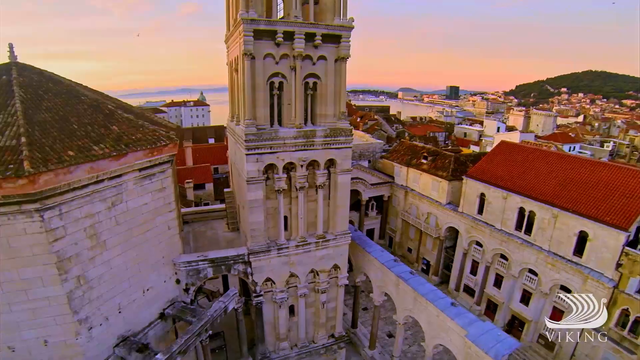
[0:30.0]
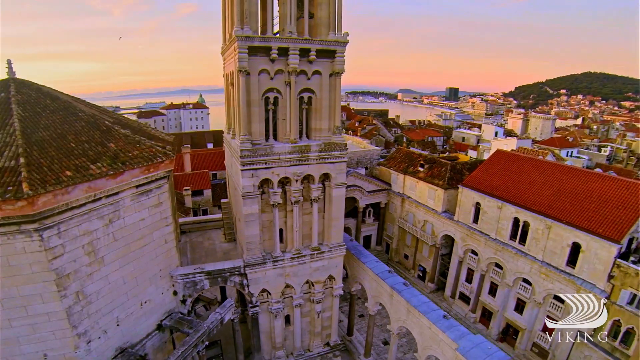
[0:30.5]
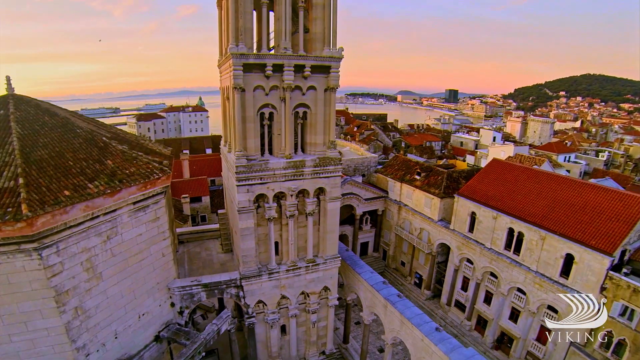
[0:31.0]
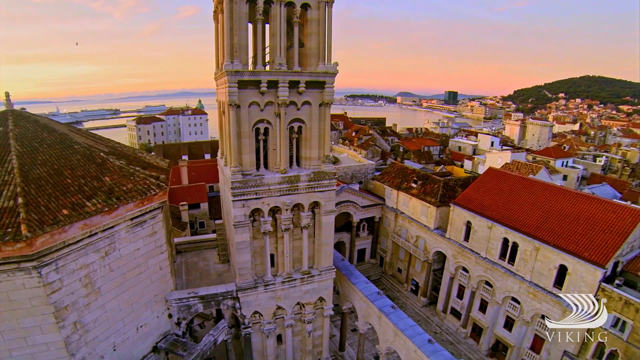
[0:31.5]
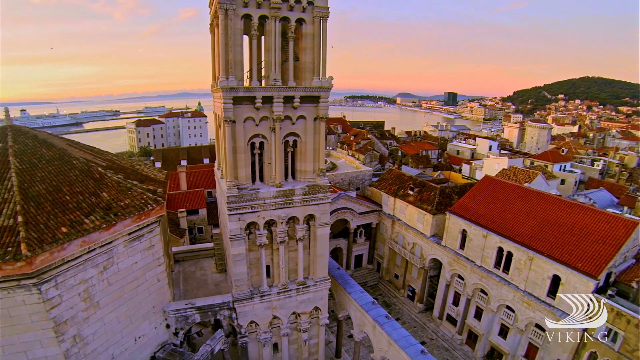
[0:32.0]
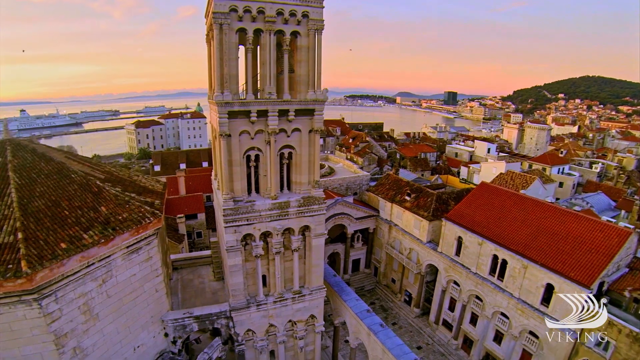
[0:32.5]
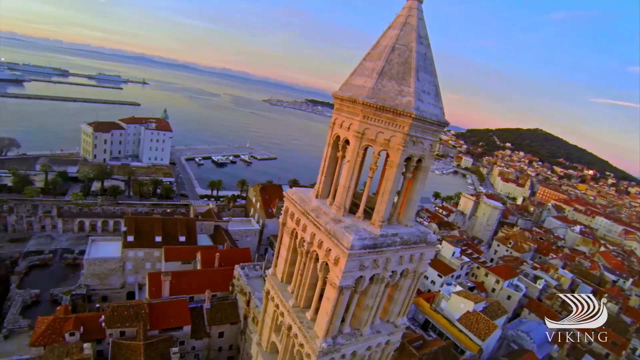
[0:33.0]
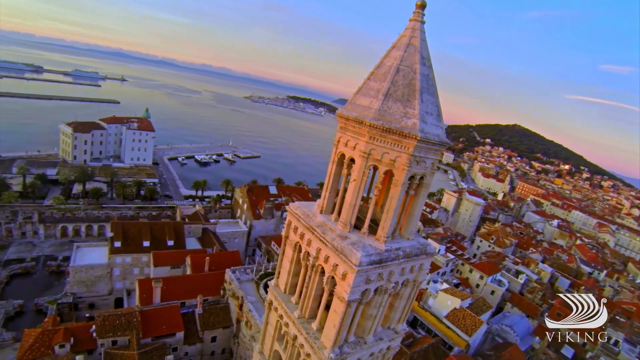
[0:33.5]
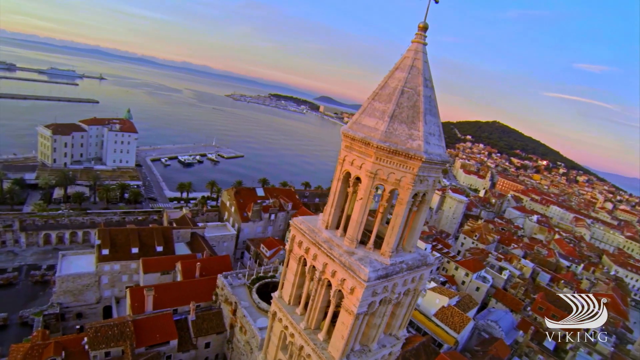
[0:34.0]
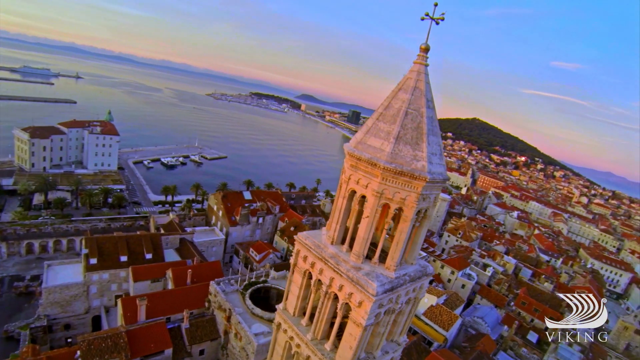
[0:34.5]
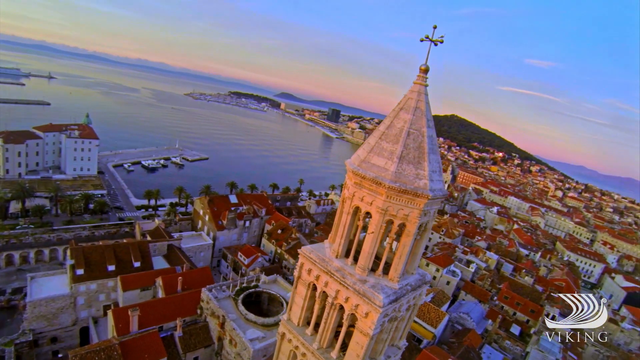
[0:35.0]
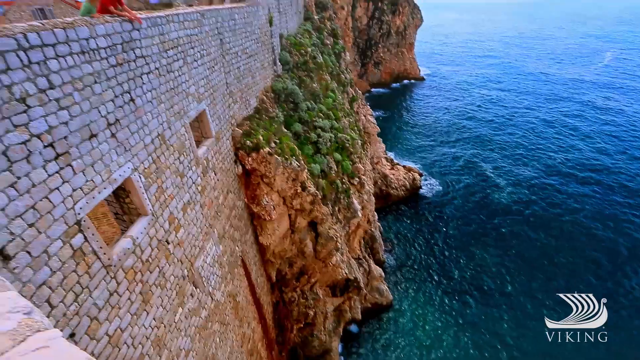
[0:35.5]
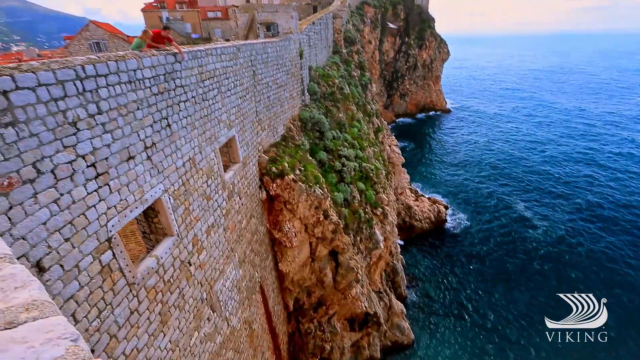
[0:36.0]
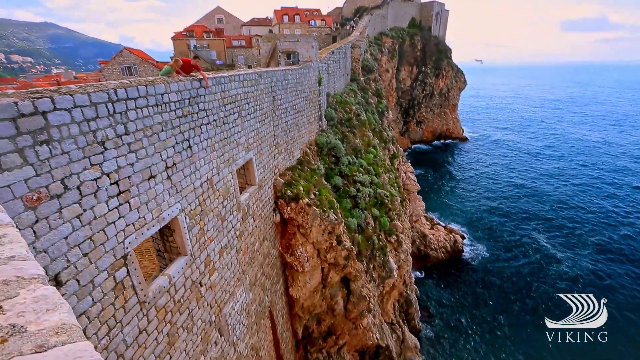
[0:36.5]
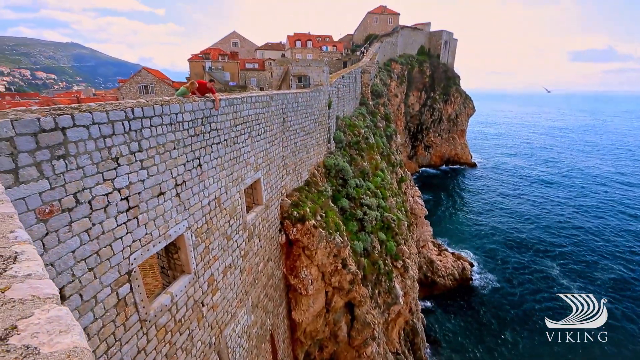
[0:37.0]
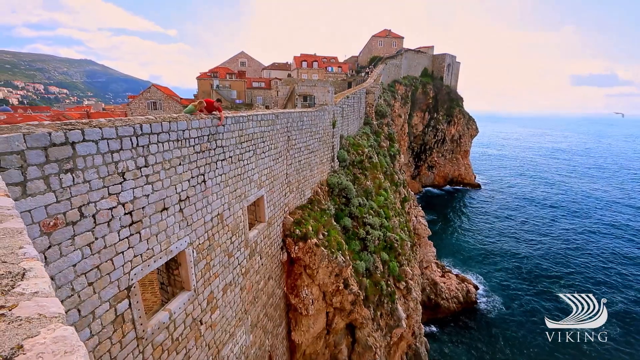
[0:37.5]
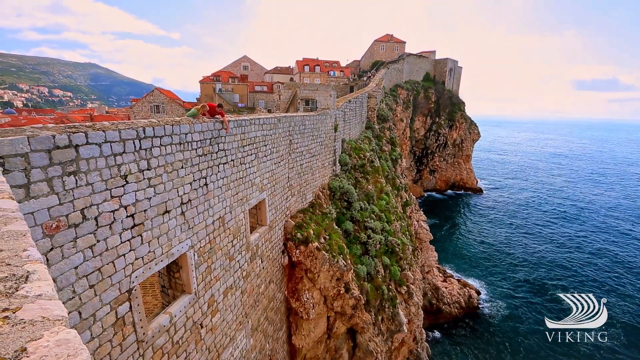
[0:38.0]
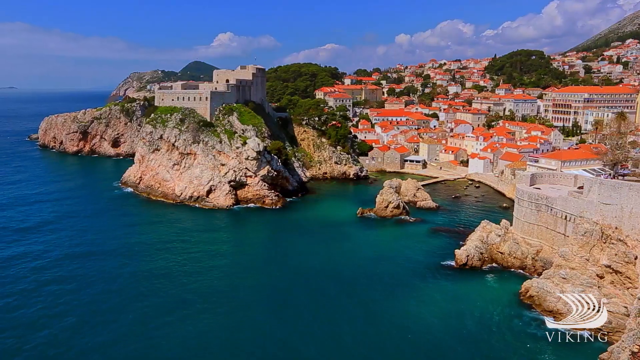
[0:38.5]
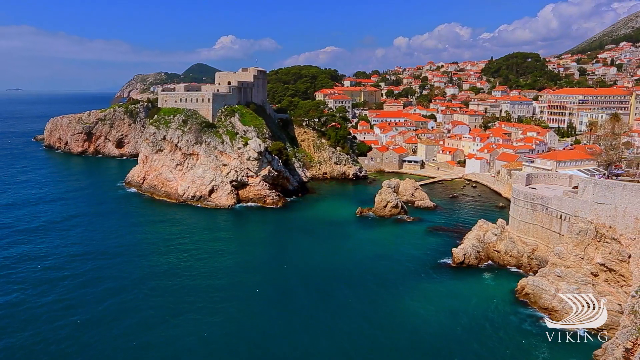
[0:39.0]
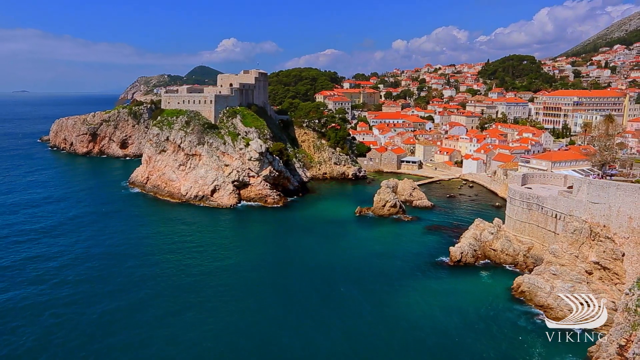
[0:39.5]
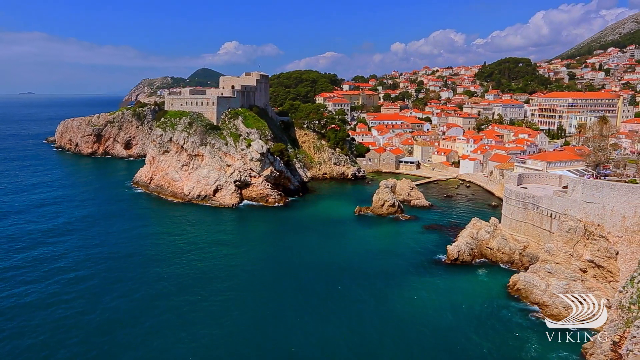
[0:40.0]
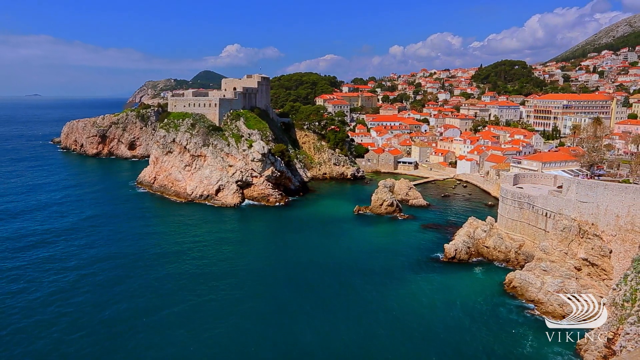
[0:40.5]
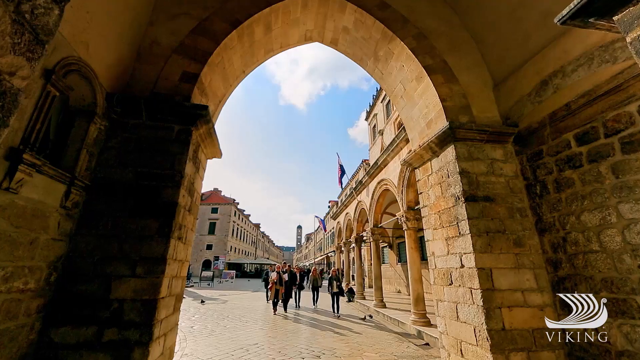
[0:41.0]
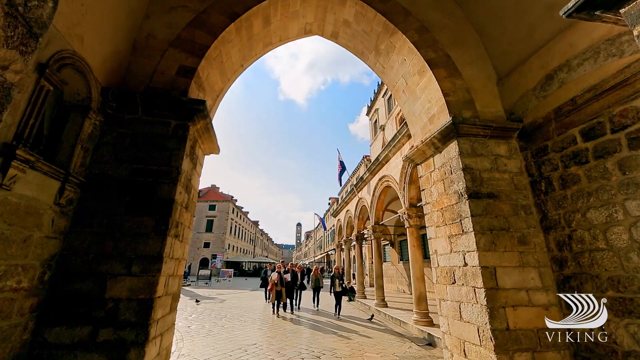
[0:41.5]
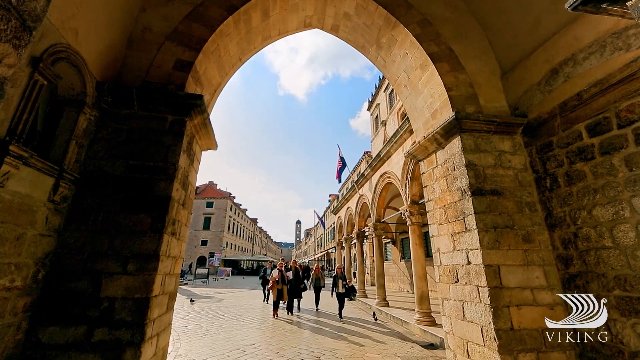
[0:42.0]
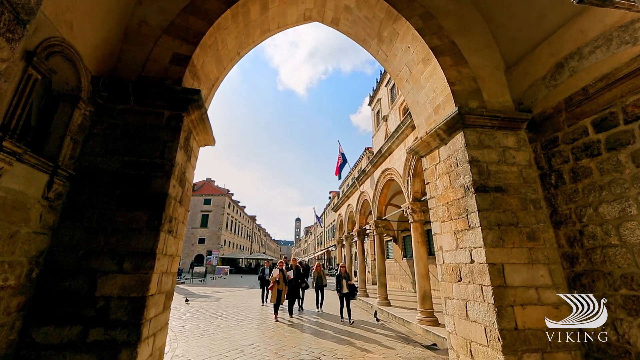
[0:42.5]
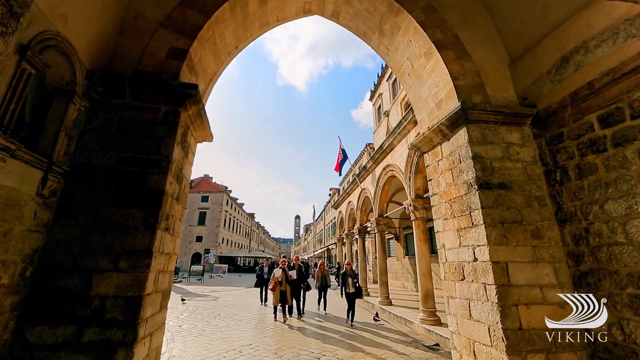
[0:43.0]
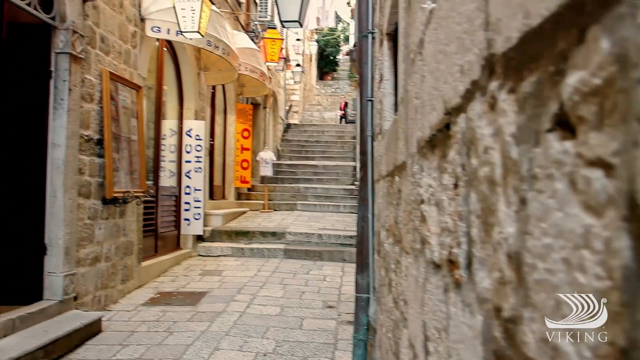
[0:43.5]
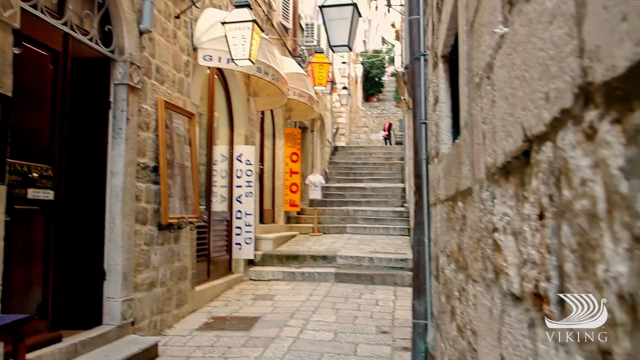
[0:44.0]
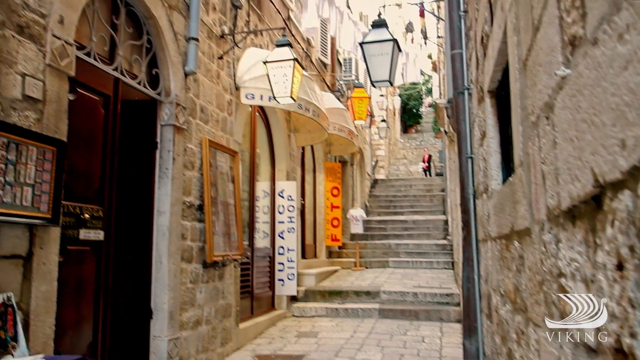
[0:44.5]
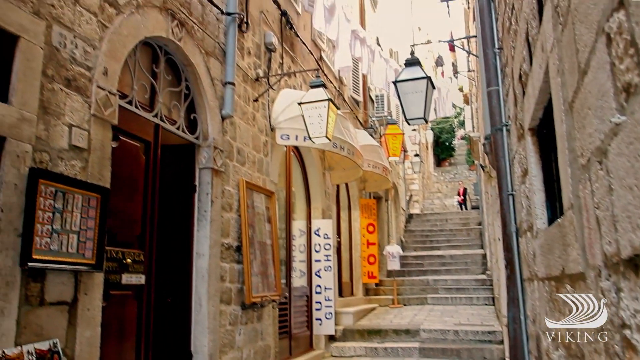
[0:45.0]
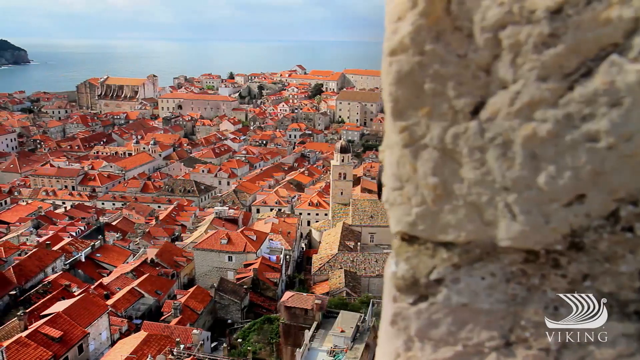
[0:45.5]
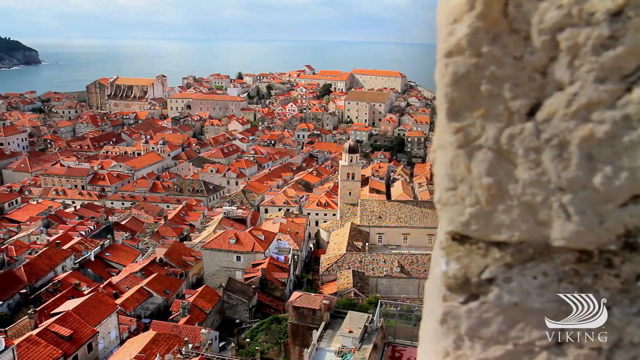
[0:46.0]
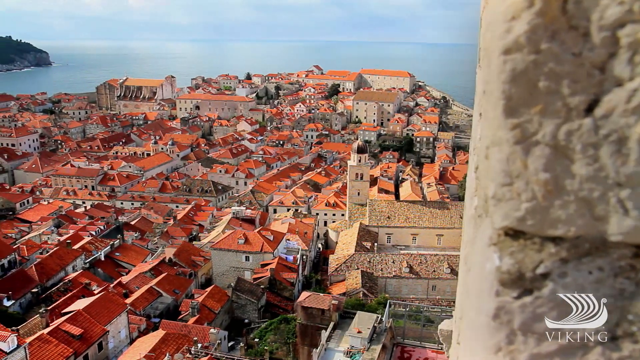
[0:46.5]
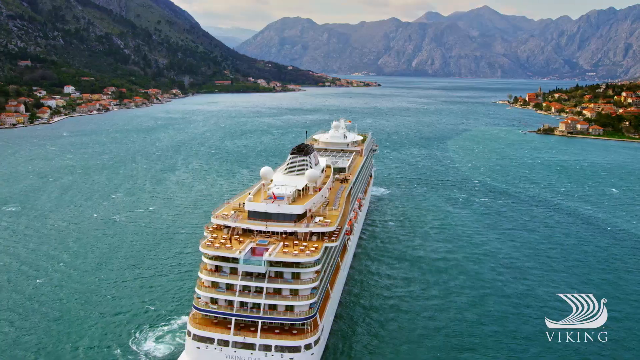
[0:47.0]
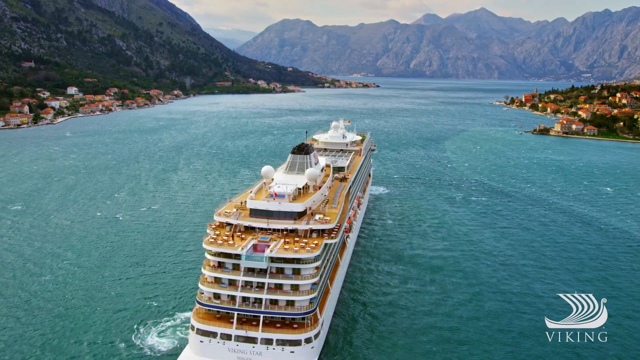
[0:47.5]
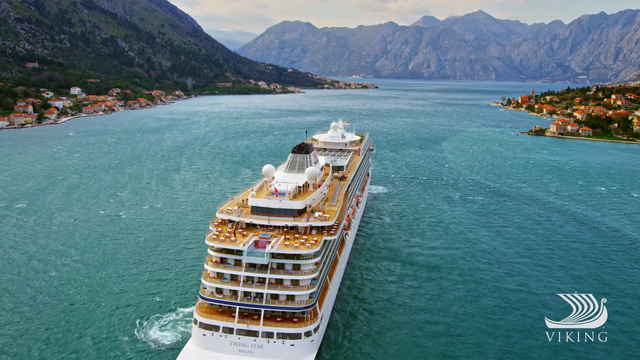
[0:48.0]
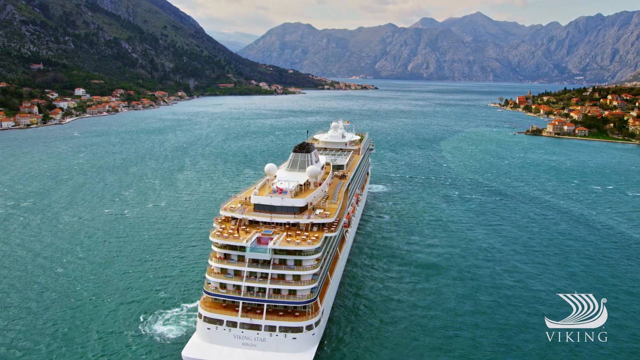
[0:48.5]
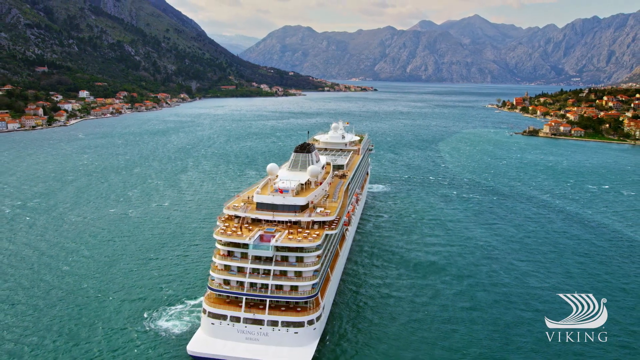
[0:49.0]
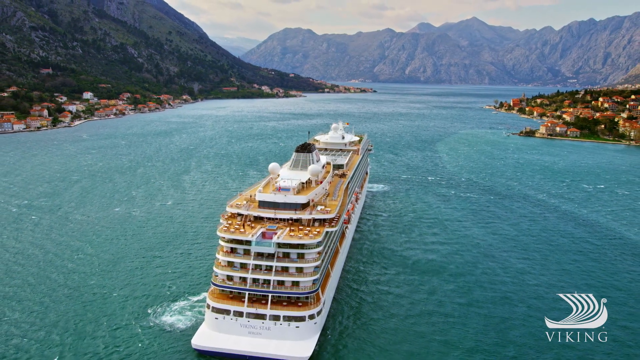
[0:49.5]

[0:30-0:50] The camera pans up to a tower with sunset colors in the background and surrounding buildings with red tiled roofs. The tower somewhat resembles a church tower but stands on its own, with a small spire and what looks like a weather vane at the top where it comes to a point, and ocean views in the background. Next is a stone bridge on the coast with cliffs on either side and blue ocean. A view as if coming from the ocean shows darker turquoise water on the left while looking up the coast at the same red-roofed city. The camera then comes through a stone archway with people walking through it, followed by an alley that appears to have shops and stone buildings. What looks like an aerial shot shows red roofs with the coast in the background. The cruise ship is then seen from an aerial view moving along the water; at the end the water is very bright turquoise, with hills and mountains in the background, viewed somewhat from above and from behind the ship.